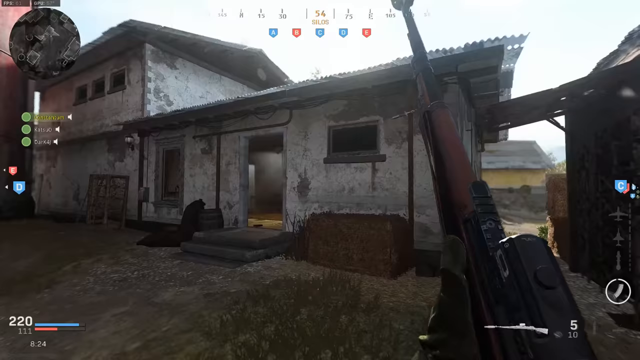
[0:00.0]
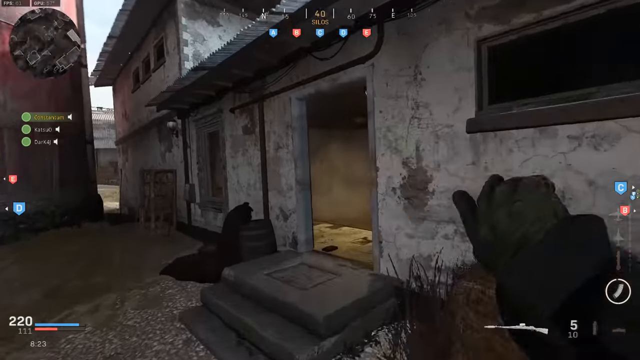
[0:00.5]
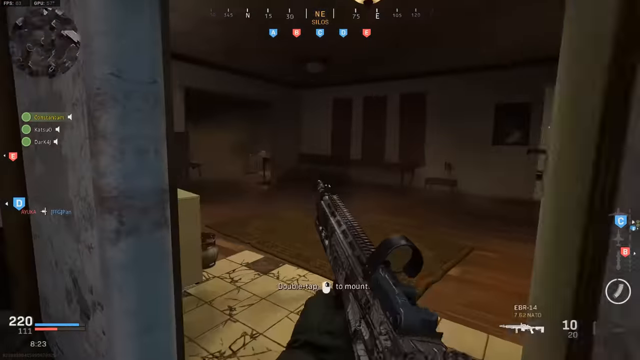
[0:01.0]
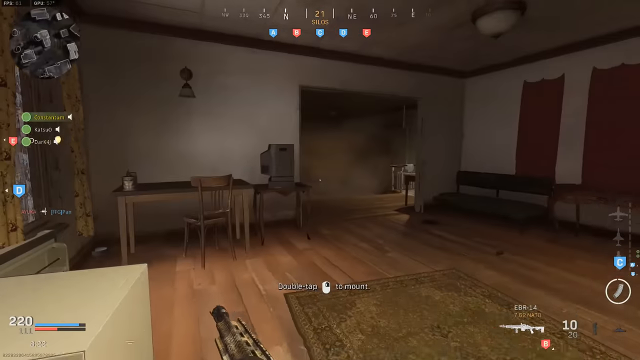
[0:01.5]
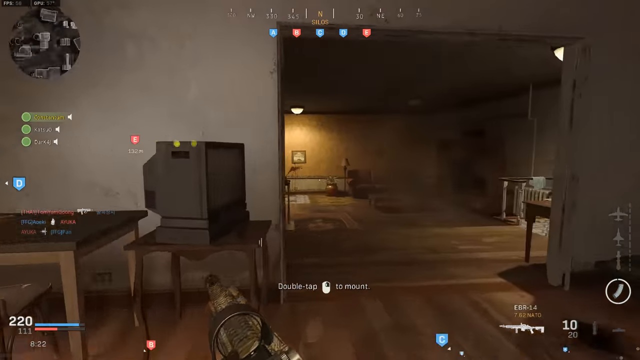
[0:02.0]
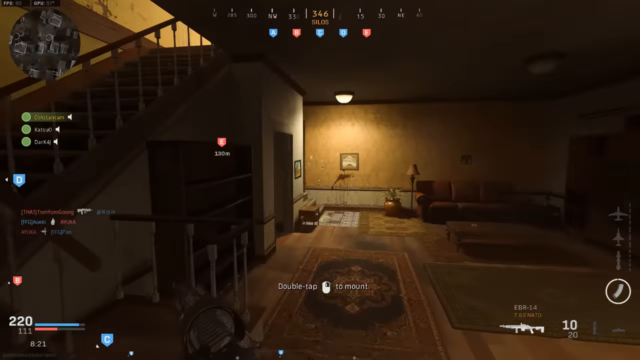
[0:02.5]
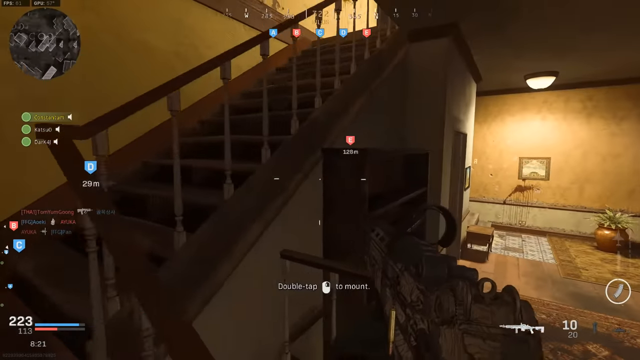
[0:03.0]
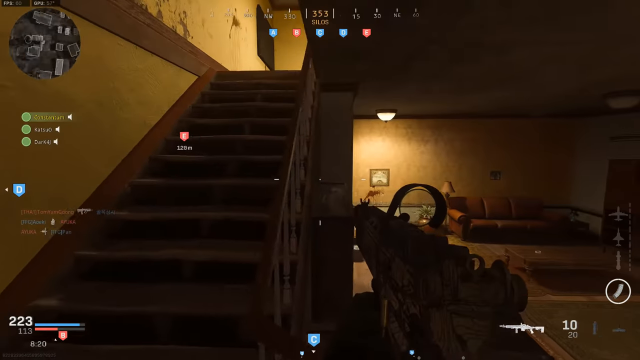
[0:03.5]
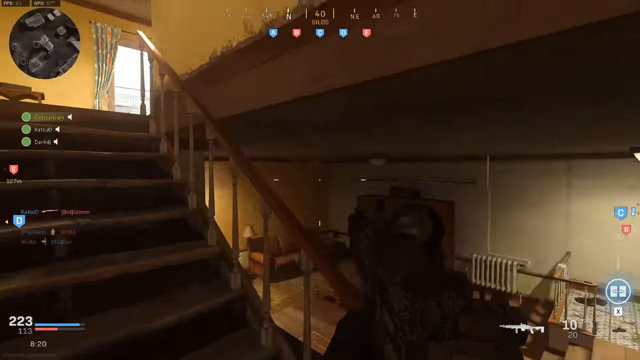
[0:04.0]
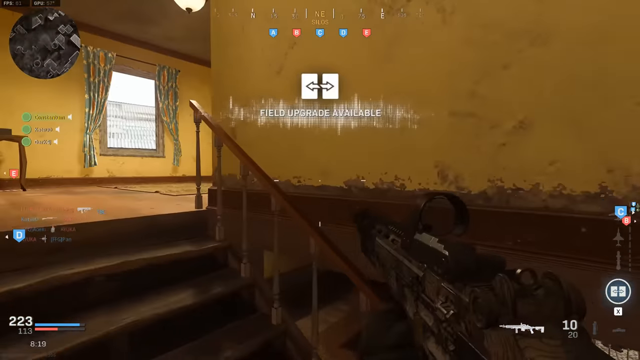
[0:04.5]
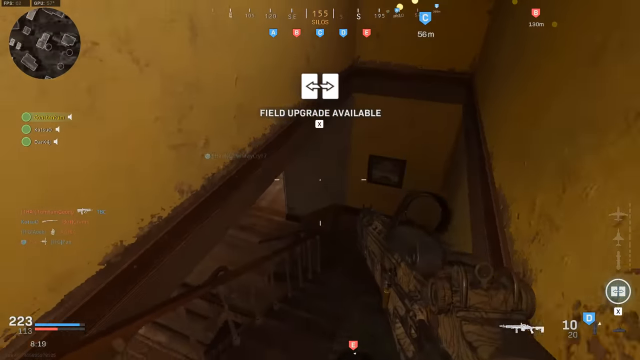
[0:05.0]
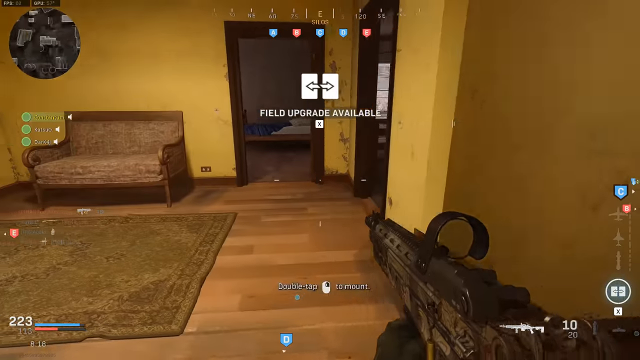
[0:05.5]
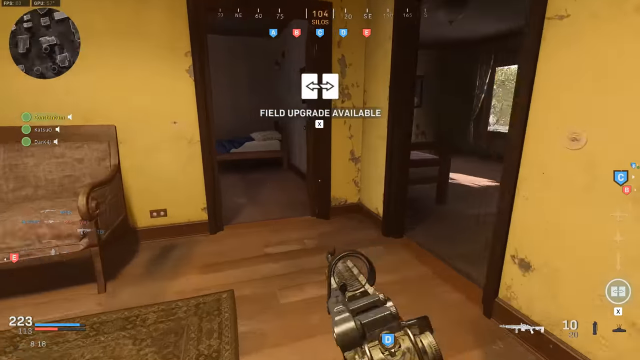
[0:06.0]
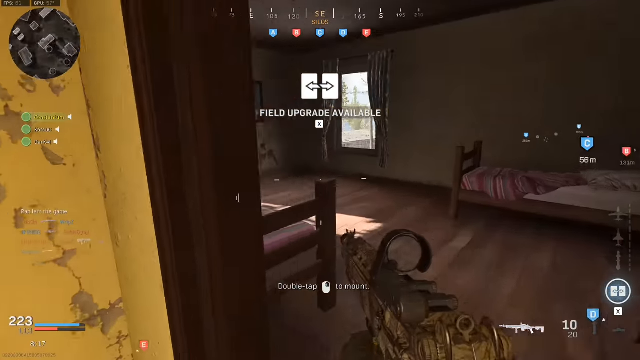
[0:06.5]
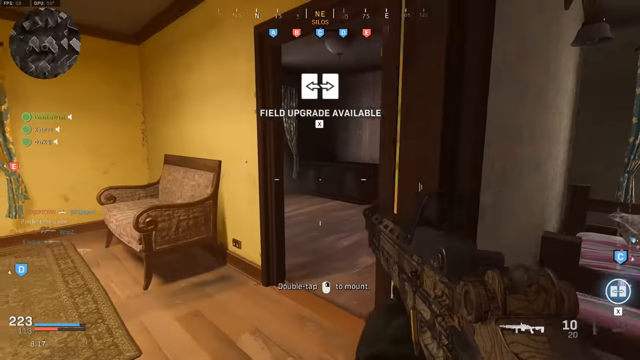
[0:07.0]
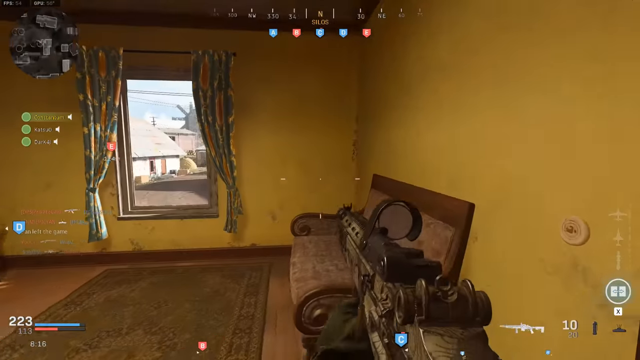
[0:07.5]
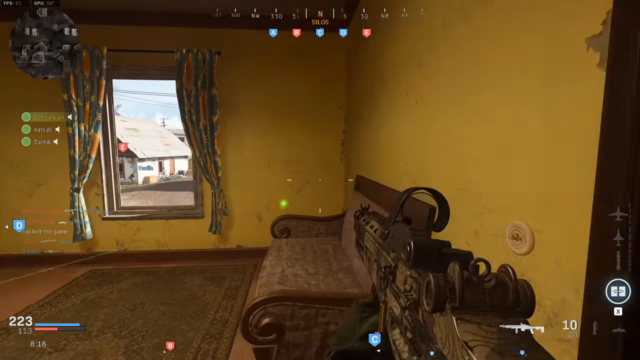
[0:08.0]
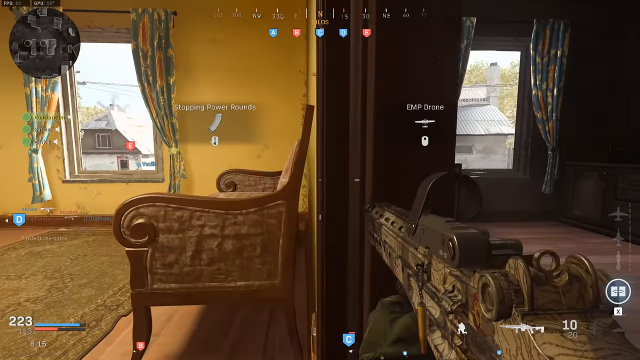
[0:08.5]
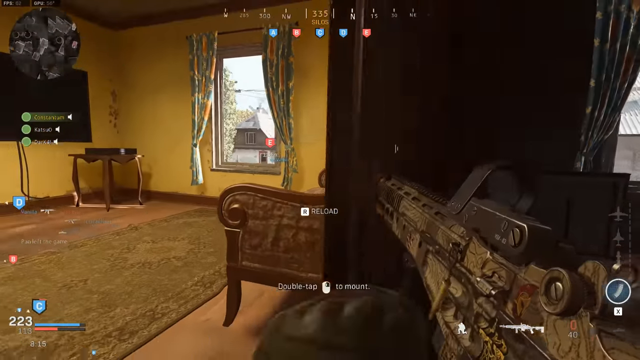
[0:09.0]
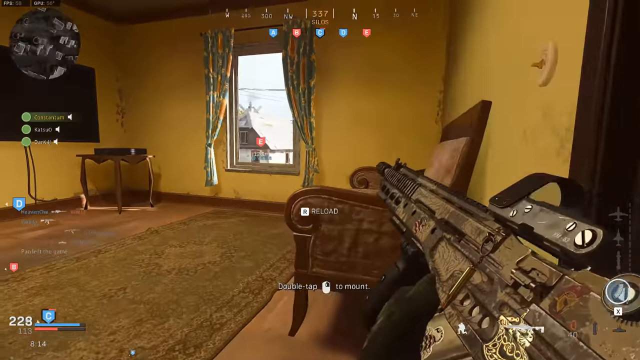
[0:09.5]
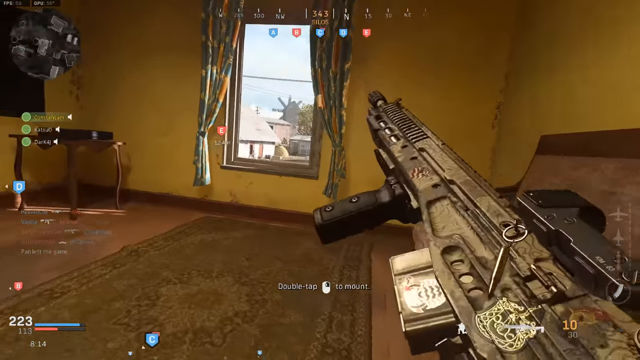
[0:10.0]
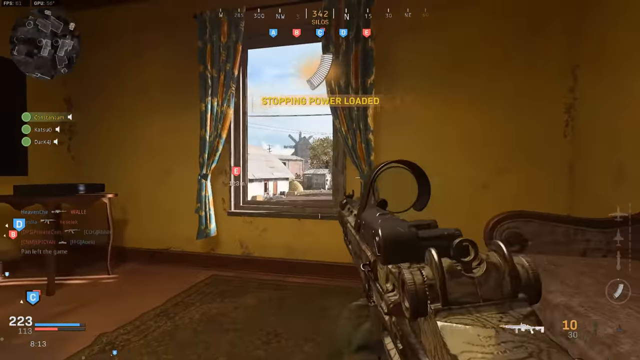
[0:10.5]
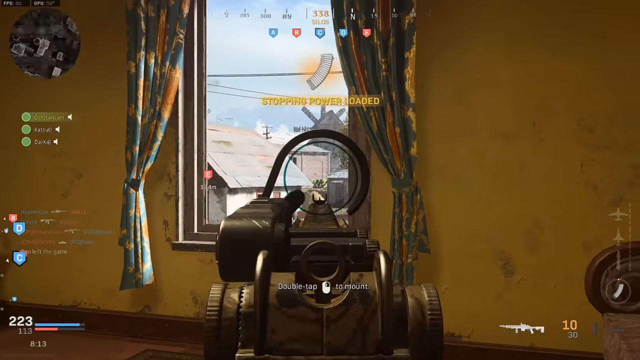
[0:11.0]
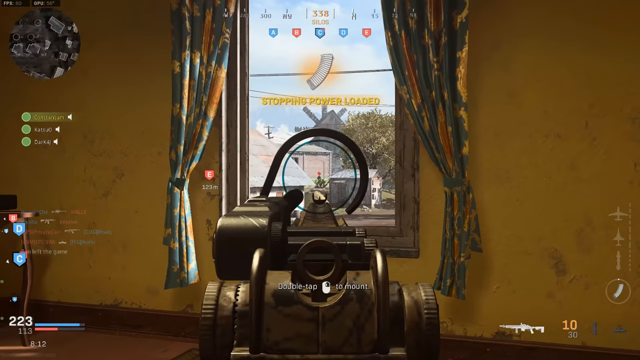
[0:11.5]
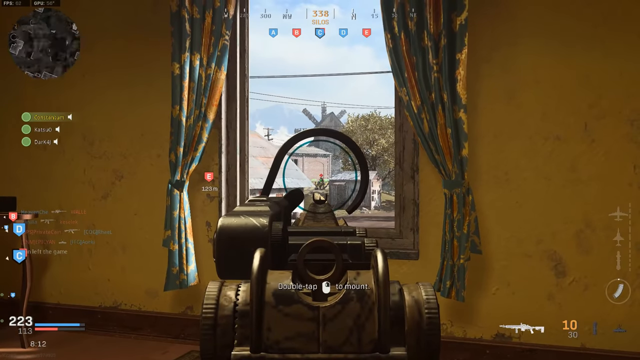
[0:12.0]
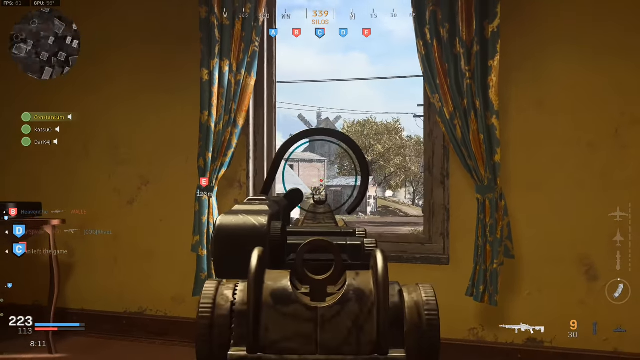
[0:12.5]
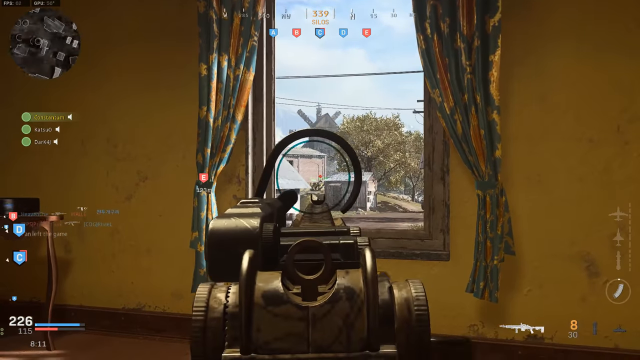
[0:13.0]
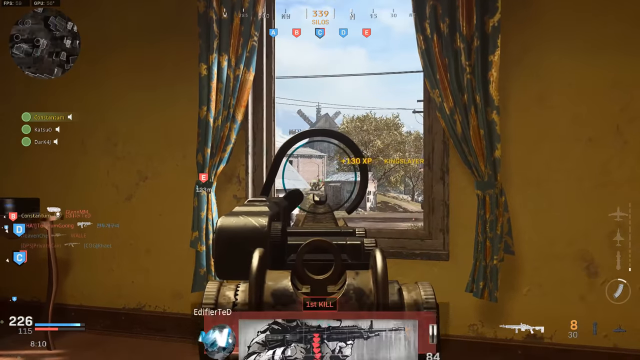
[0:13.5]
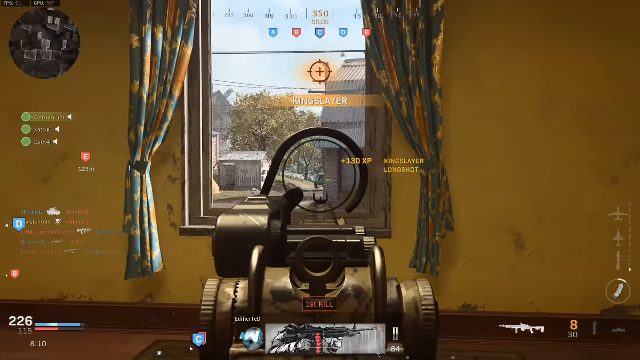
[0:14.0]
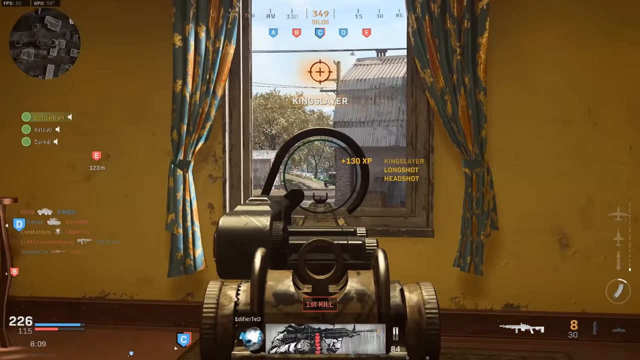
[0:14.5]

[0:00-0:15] Gameplay from what appears to be a Call of Duty game is shown from a first-person perspective, with the character holding a rifle and running into some sort of house. The character runs through a doorway with no door, past a room with a table and a television, and heads upstairs. Text on the screen reads "field upgrade available." The character looks into a bedroom with two beds, then in a different room kind of crouches down and points the rifle out a window toward another building of some sort, shooting at some kind of enemy. While shooting, words pop up on the screen reading "+130 XP" and "Kingslayer Longshot Headshot," possibly indicating the enemy was killed with a shot to the head. "First kill" appears underneath the rifle.